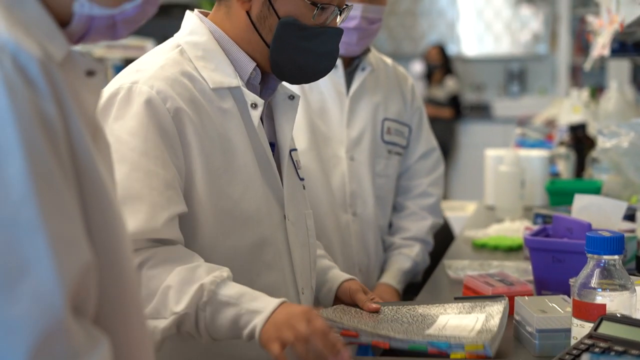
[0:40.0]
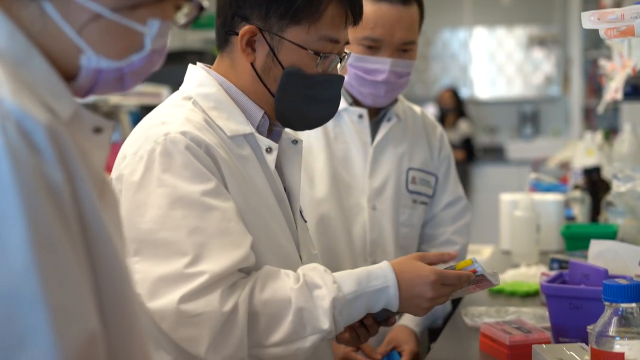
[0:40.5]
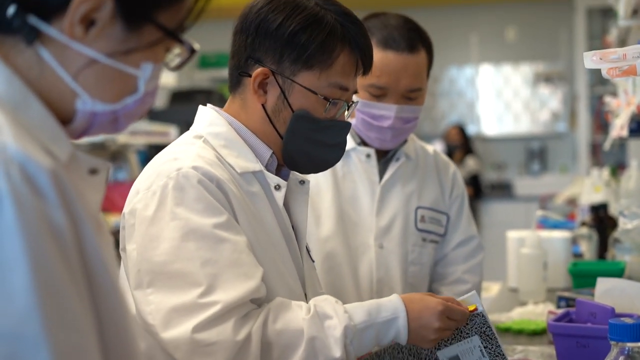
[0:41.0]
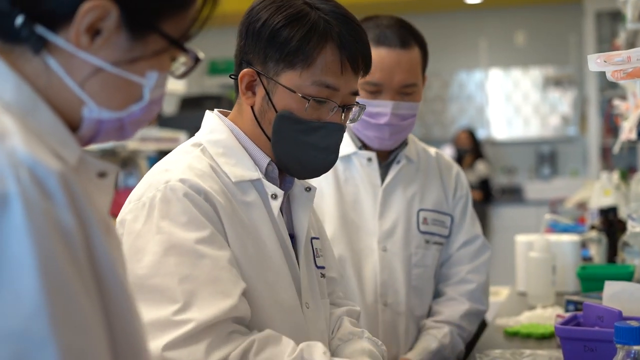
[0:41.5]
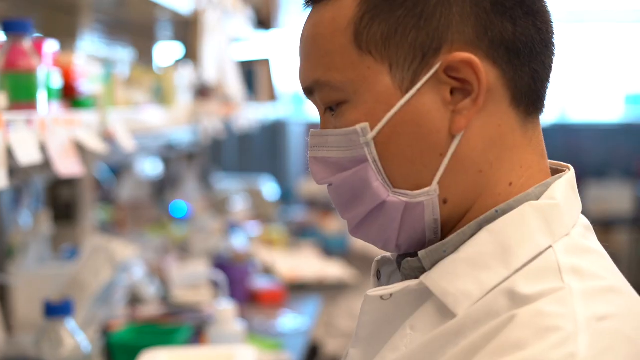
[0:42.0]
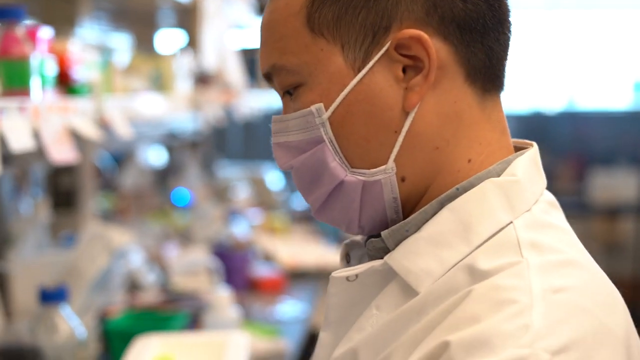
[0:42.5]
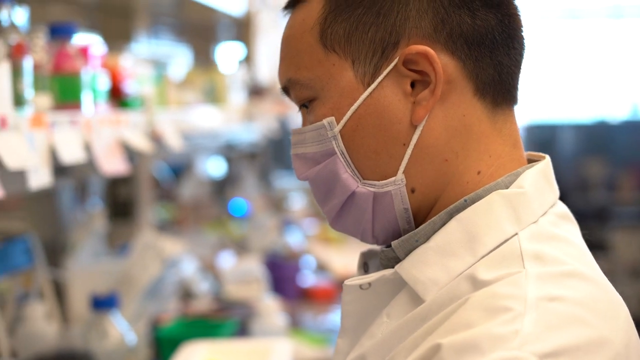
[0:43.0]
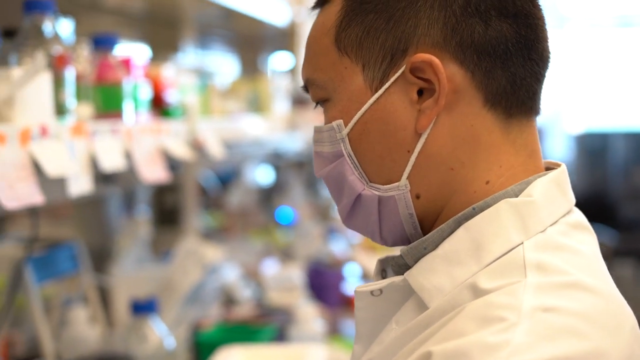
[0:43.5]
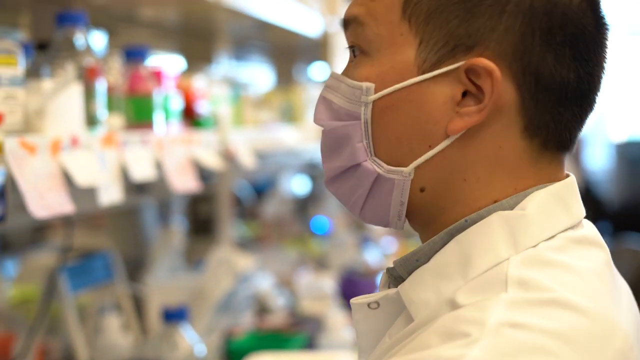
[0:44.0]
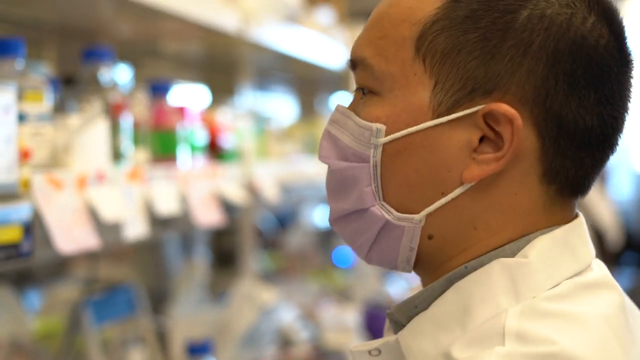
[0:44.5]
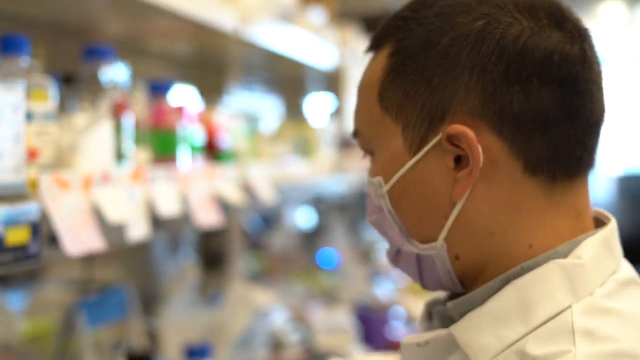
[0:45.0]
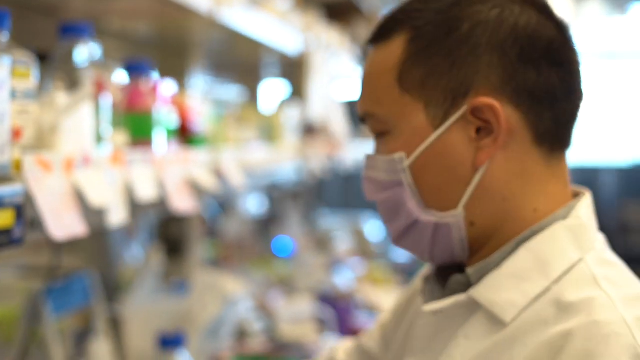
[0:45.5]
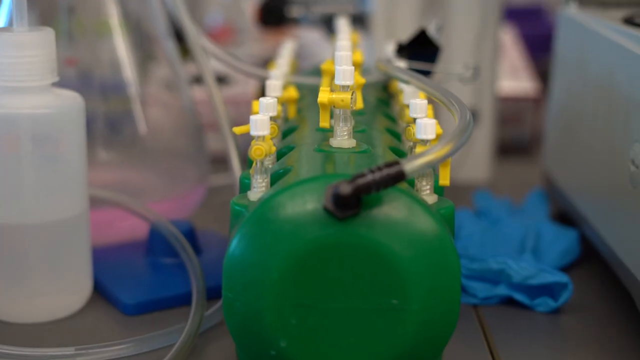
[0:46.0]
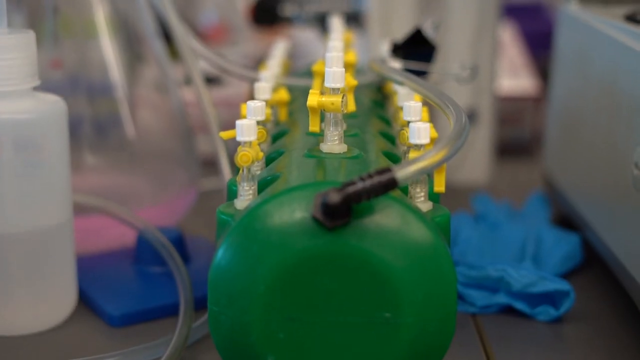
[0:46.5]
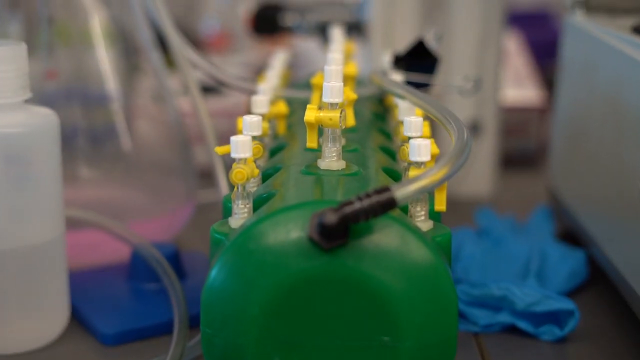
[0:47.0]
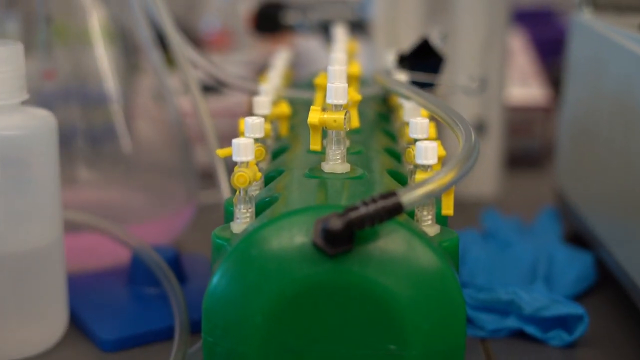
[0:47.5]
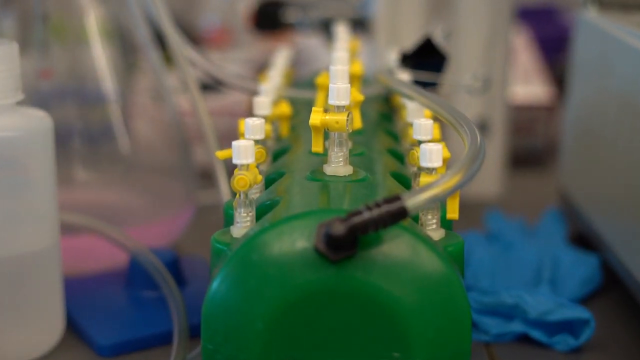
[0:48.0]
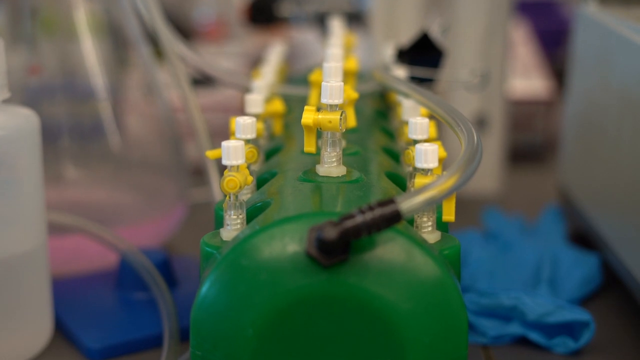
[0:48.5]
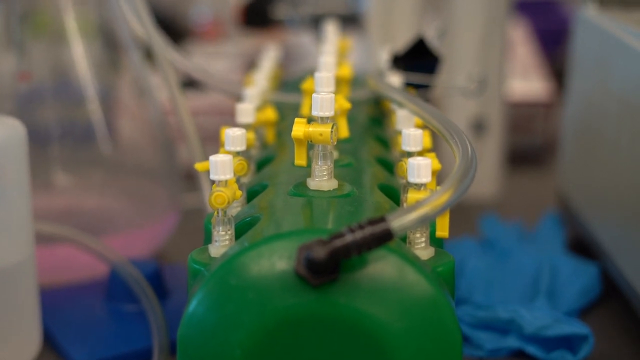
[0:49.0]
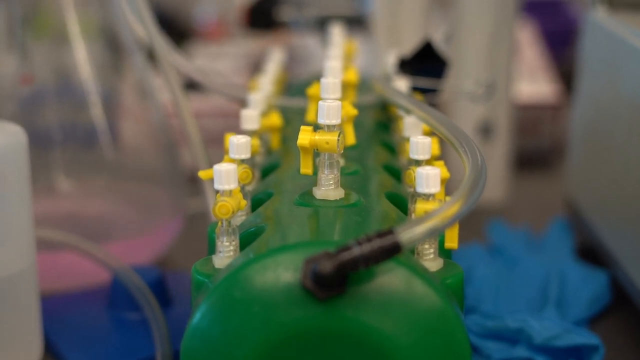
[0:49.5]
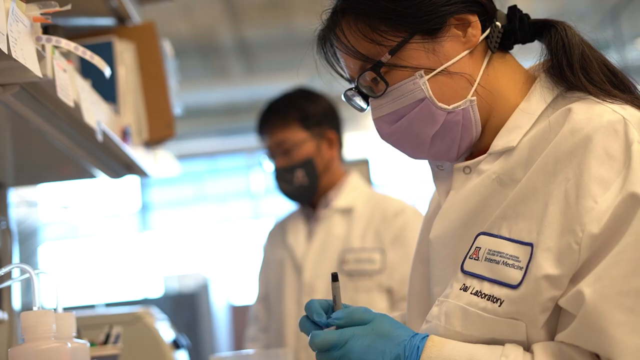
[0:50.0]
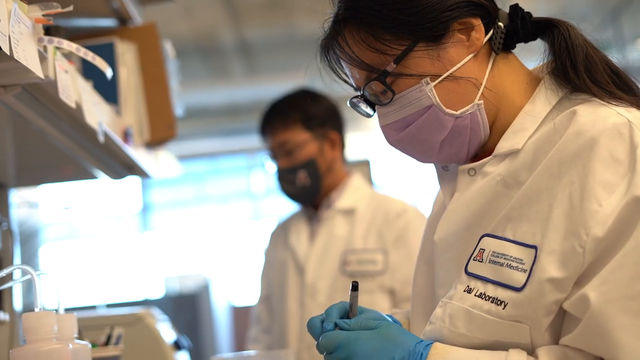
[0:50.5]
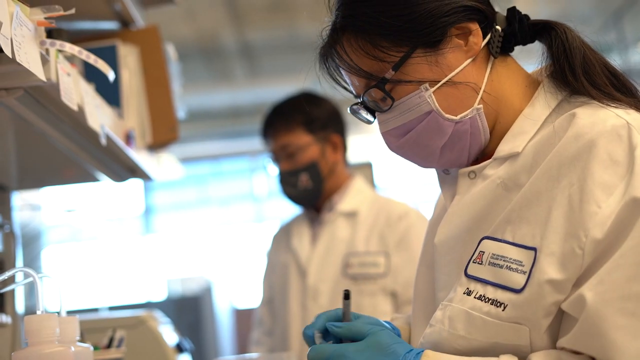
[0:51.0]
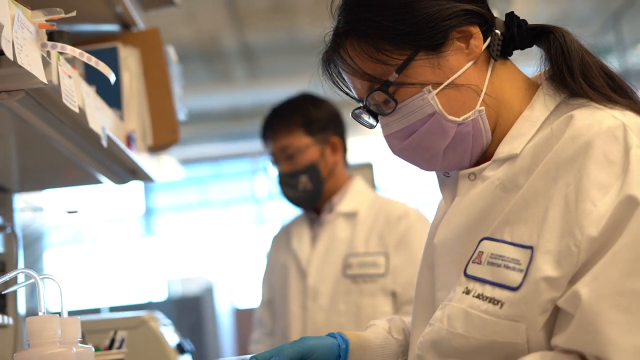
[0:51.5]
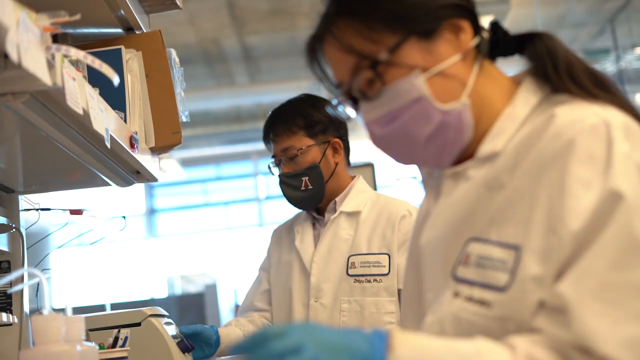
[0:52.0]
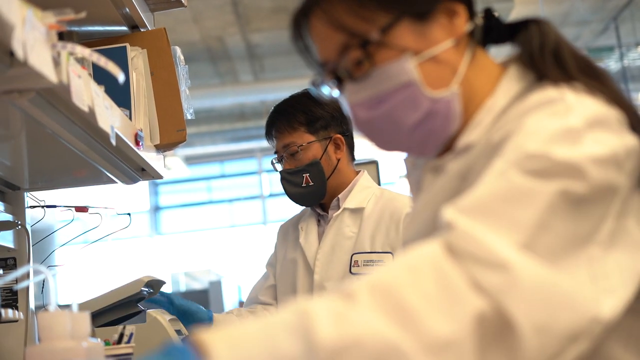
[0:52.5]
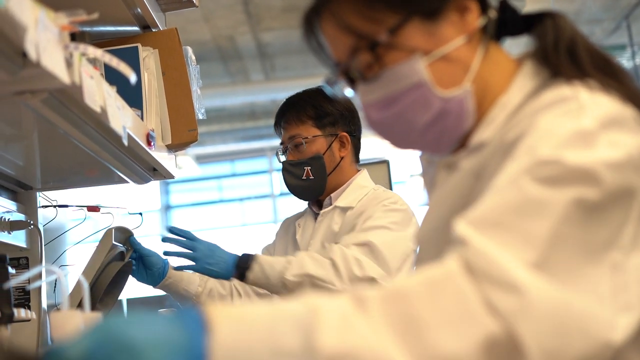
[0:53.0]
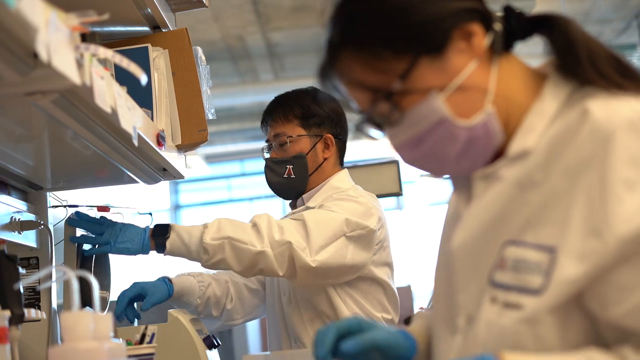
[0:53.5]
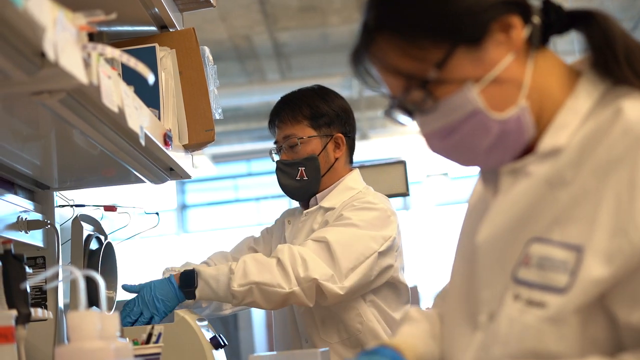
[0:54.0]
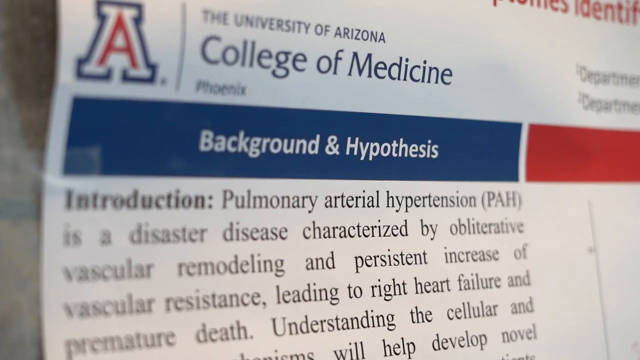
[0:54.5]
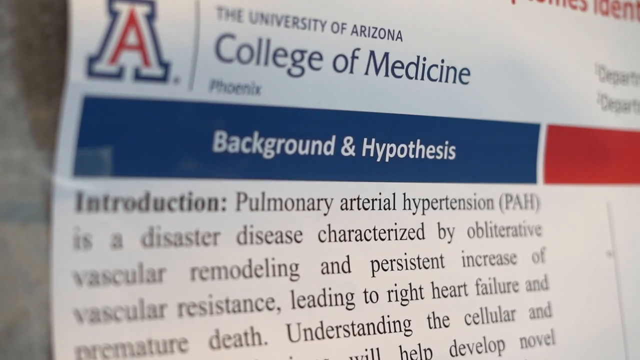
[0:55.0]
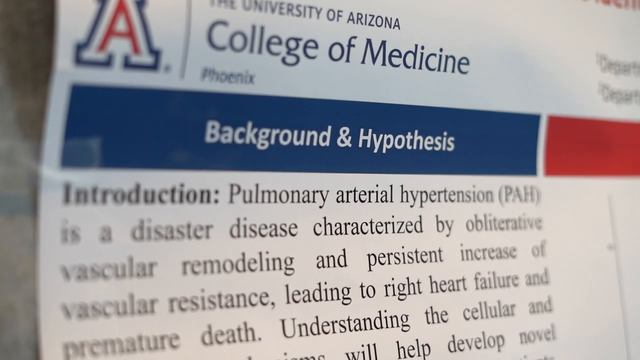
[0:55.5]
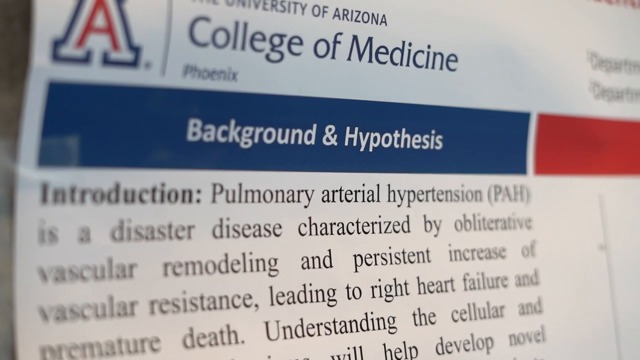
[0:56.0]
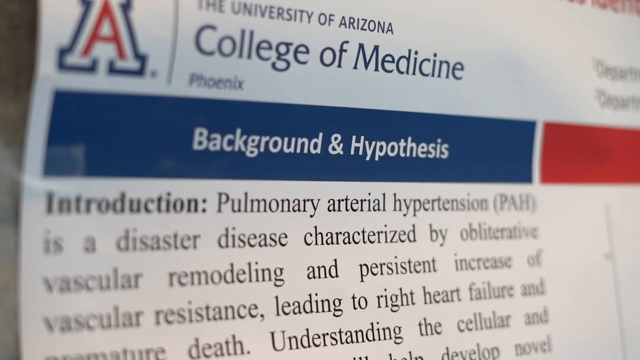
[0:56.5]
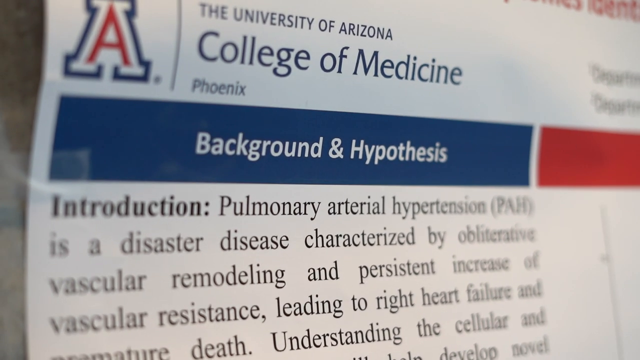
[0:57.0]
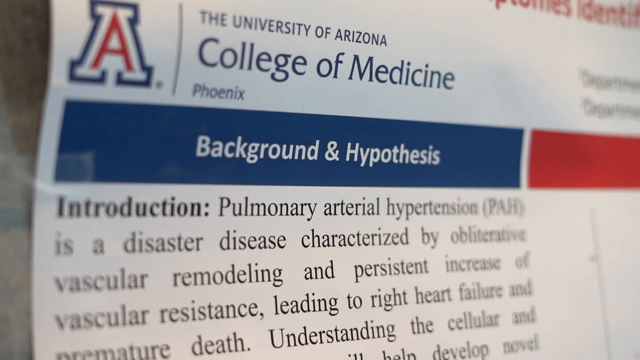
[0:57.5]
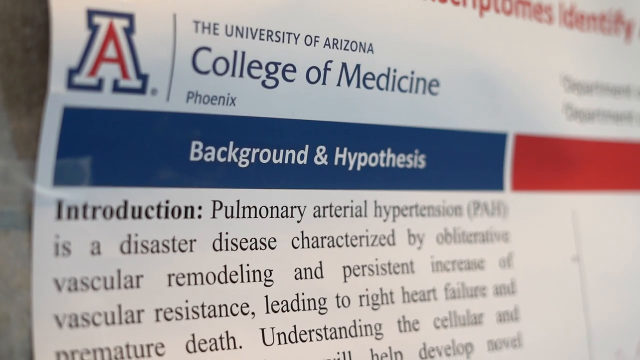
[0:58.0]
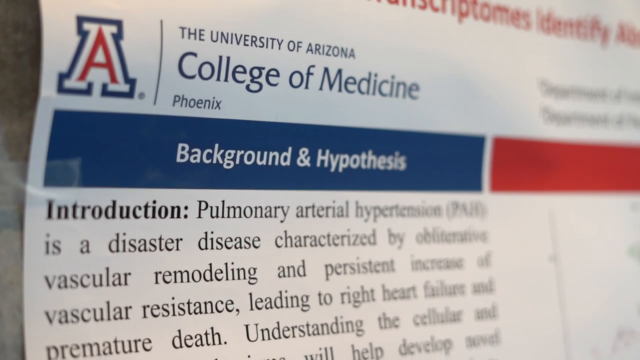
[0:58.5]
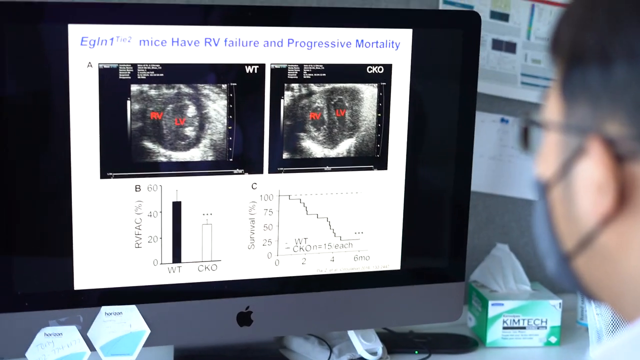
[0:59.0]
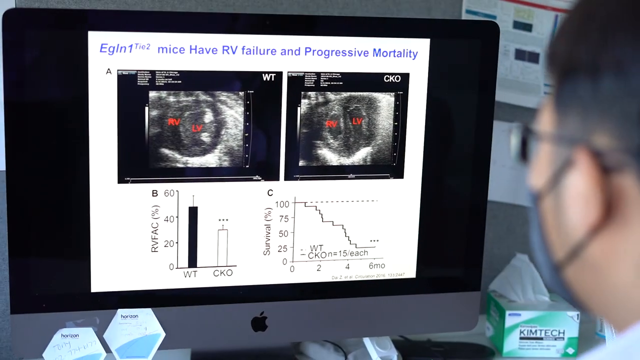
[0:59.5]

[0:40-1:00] Three researchers discuss information from a notebook. The one holding the notebook wears a black face mask, glasses and a white lab coat; the two others, one on each side, wear purple face masks and white lab coats. The camera pans to another individual in a purple mask and white lab coat who is looking down. In front of him is a shelf; the objects on it are blurry, but many different colors and shapes of containers are visible. The camera then pans to a green device with three rows of tubes sticking out from the top and another hose connected to the front; the tip of the hose is black and the rest of it is clear. Next, a researcher with long brown hair, glasses and a pink-purple face mask looks down and writes in a notebook. Behind her is a man with glasses and a black face mask; both wear white lab coats. The man behind her opens a device. A piece of paper reading "College of Medicine" is shown, and then a researcher looks at a screen displaying two scanned images, a bar graph and a line graph.